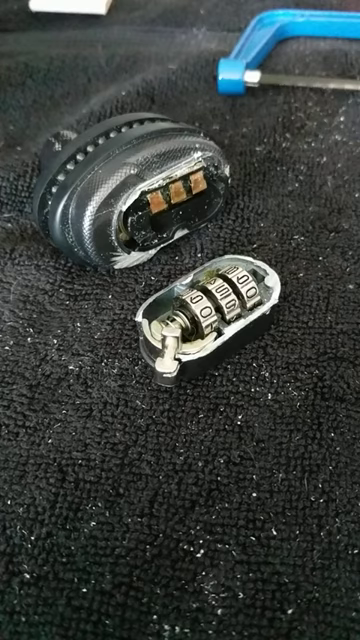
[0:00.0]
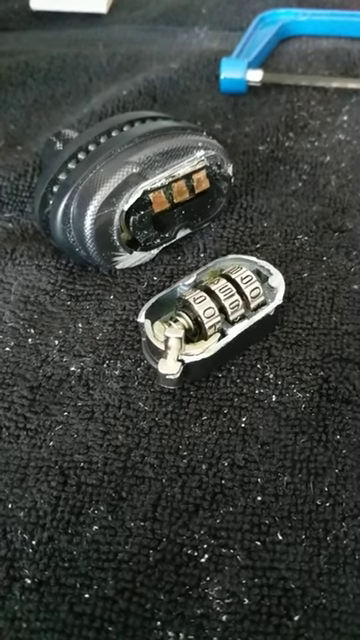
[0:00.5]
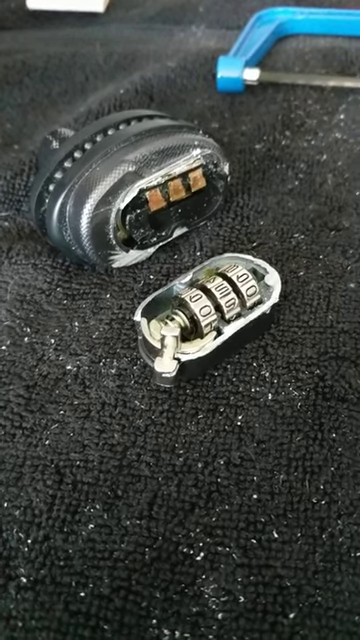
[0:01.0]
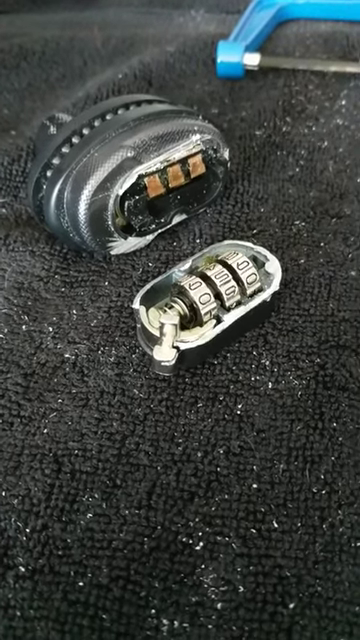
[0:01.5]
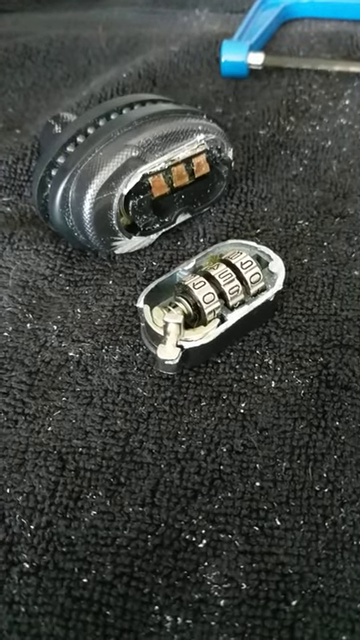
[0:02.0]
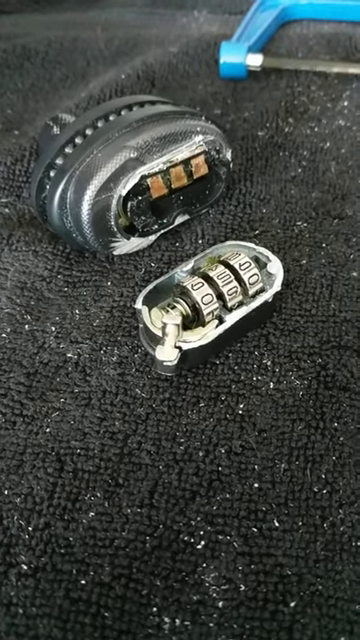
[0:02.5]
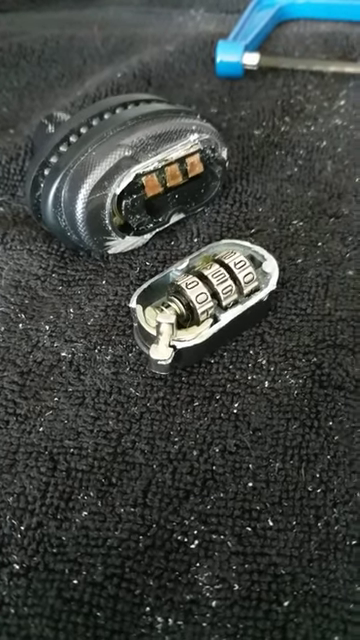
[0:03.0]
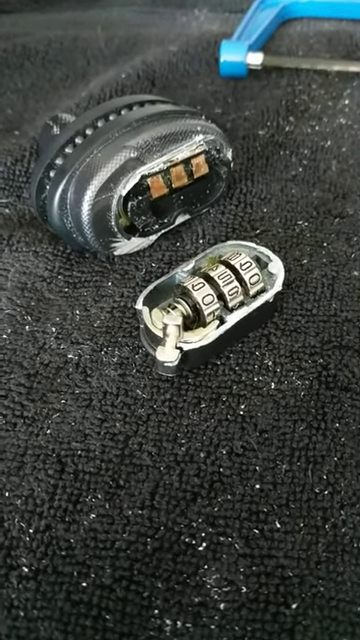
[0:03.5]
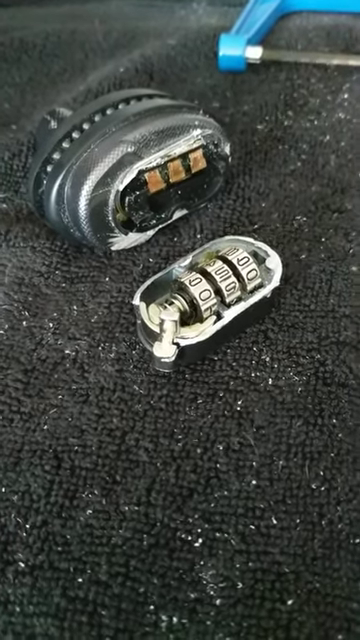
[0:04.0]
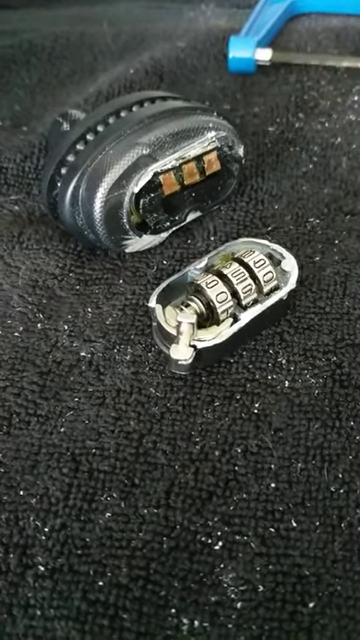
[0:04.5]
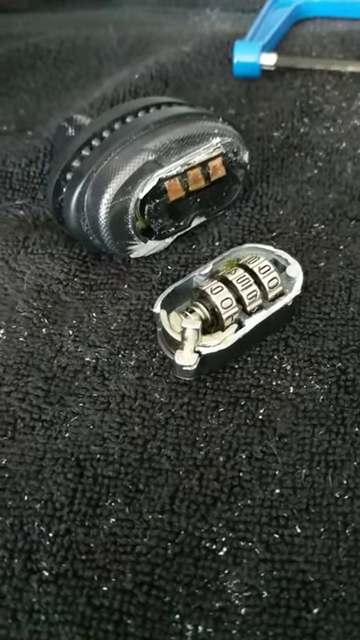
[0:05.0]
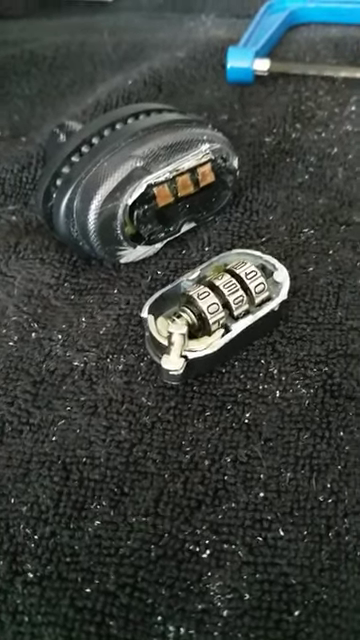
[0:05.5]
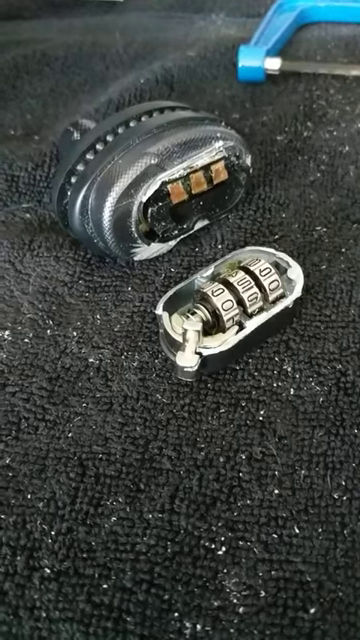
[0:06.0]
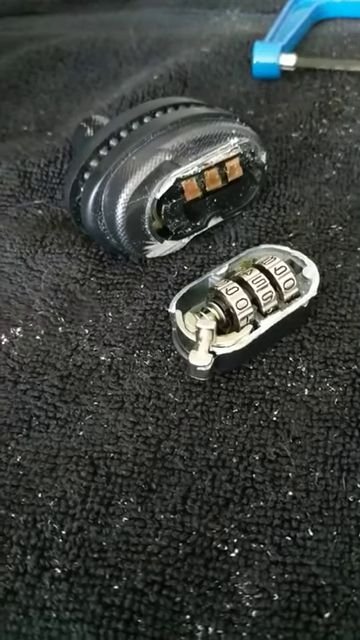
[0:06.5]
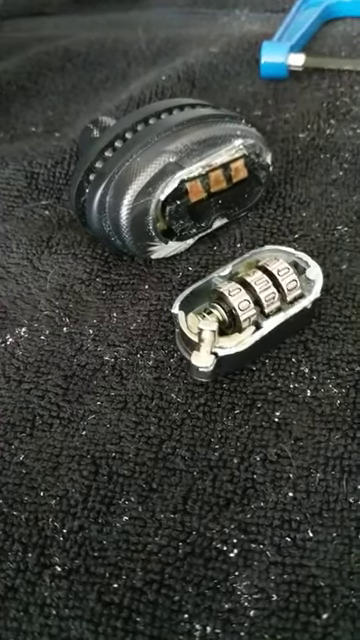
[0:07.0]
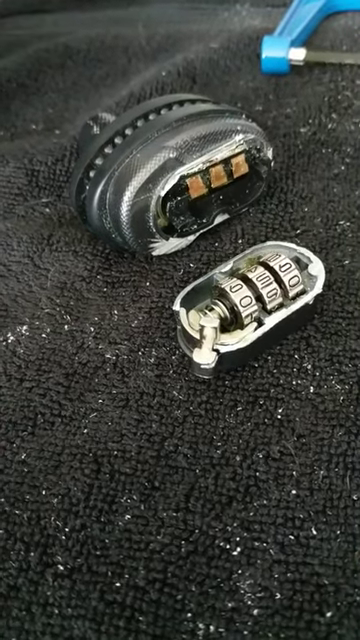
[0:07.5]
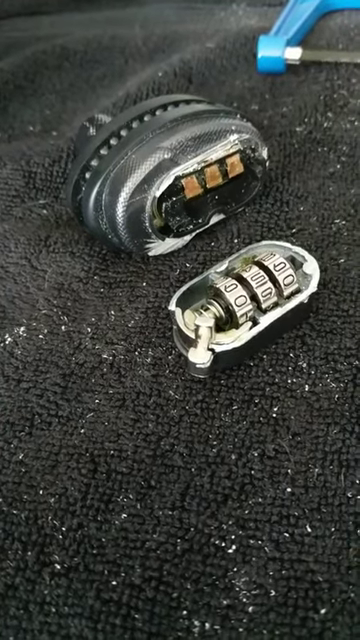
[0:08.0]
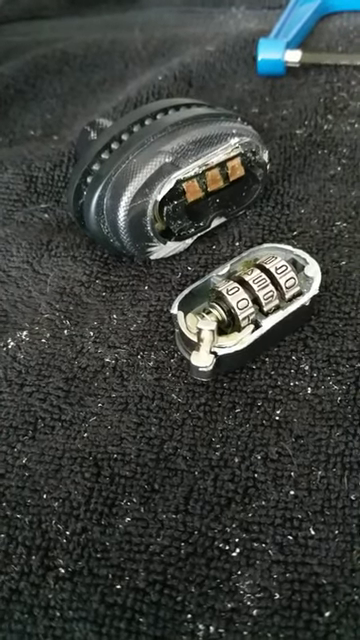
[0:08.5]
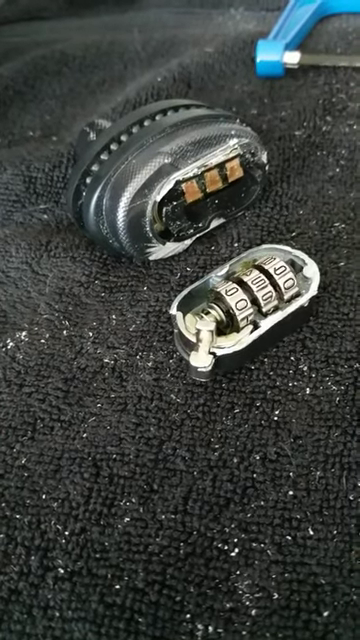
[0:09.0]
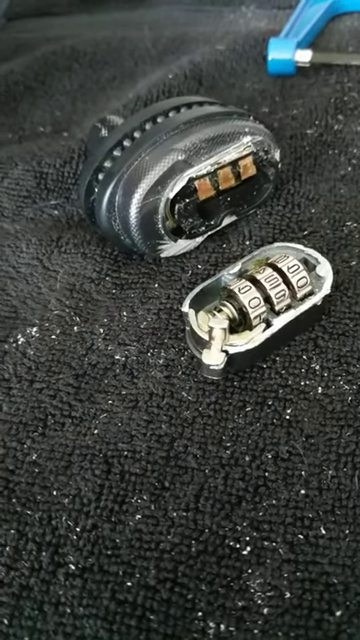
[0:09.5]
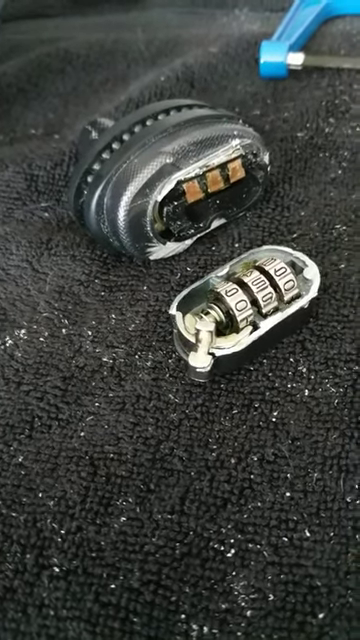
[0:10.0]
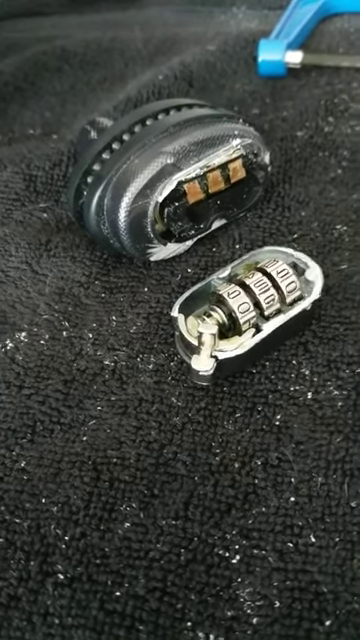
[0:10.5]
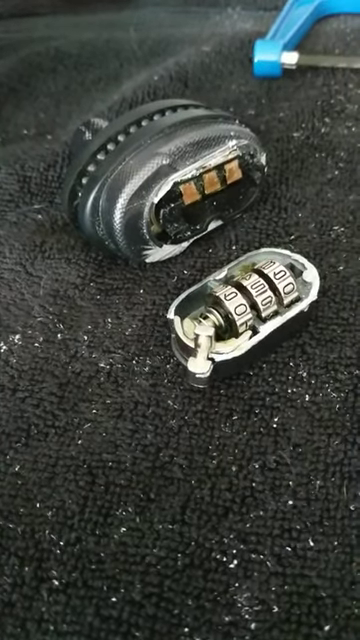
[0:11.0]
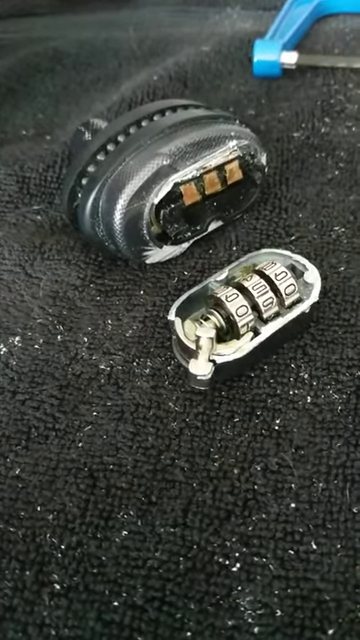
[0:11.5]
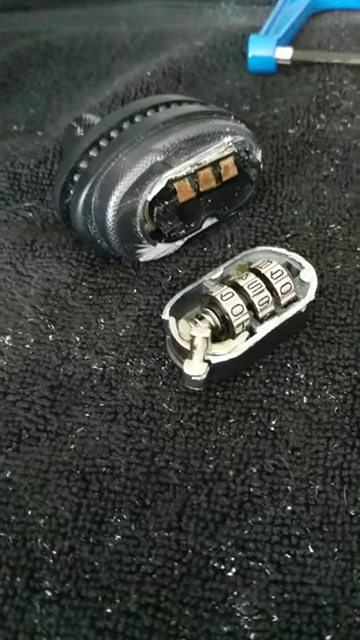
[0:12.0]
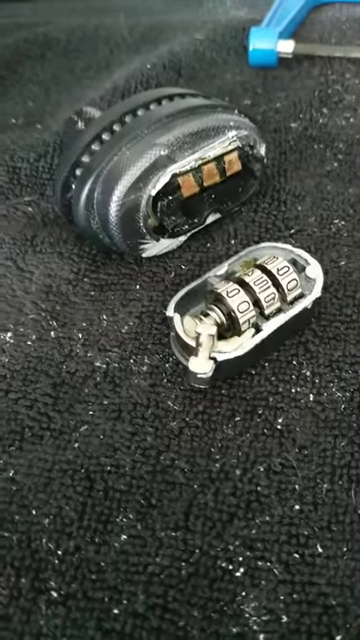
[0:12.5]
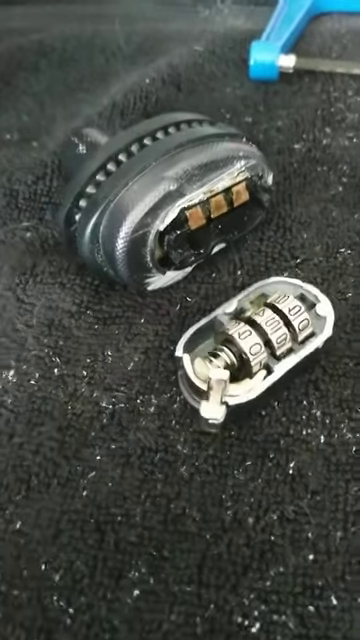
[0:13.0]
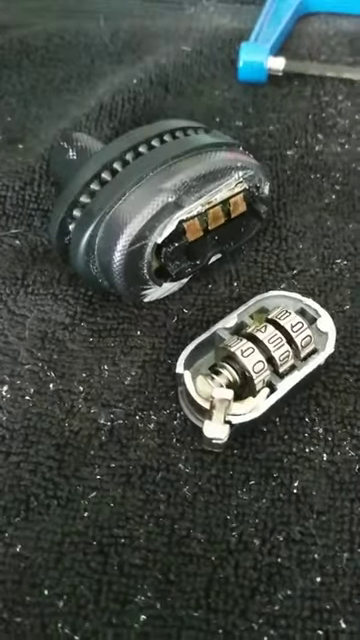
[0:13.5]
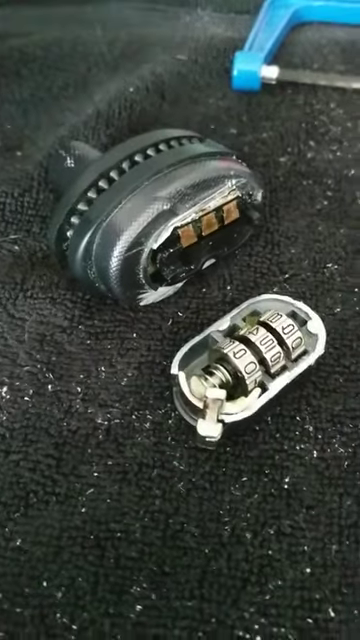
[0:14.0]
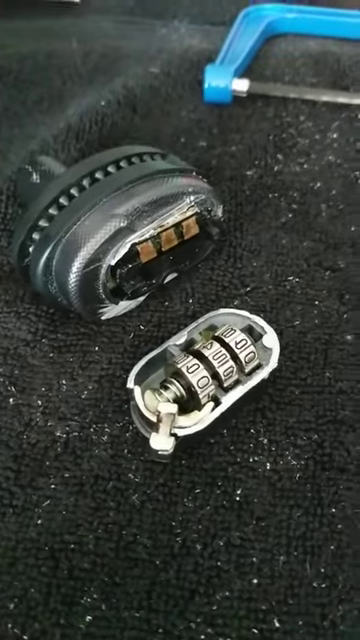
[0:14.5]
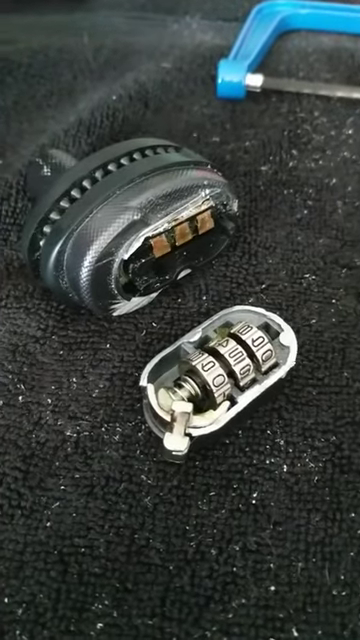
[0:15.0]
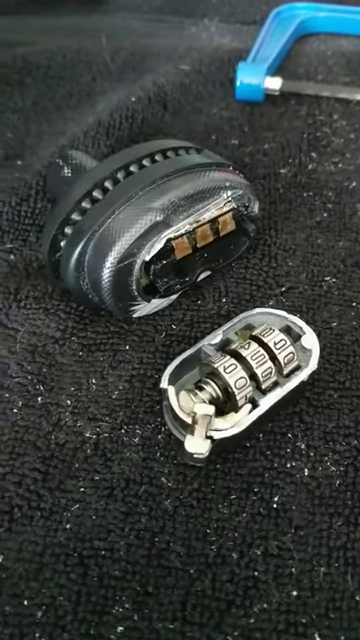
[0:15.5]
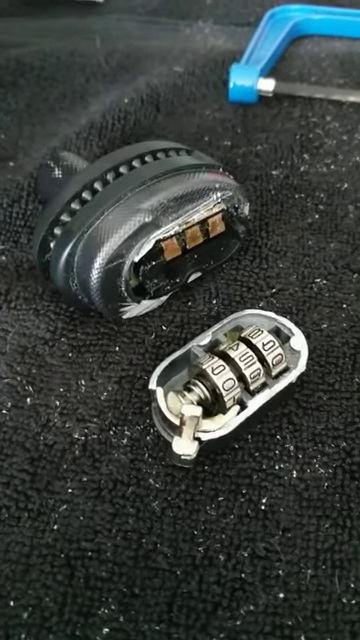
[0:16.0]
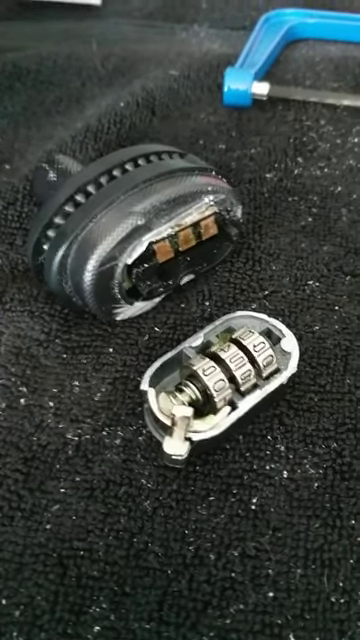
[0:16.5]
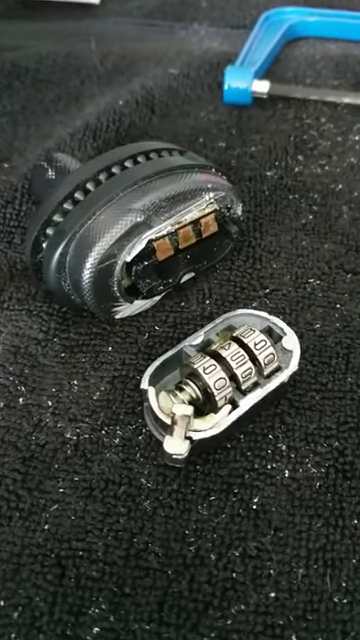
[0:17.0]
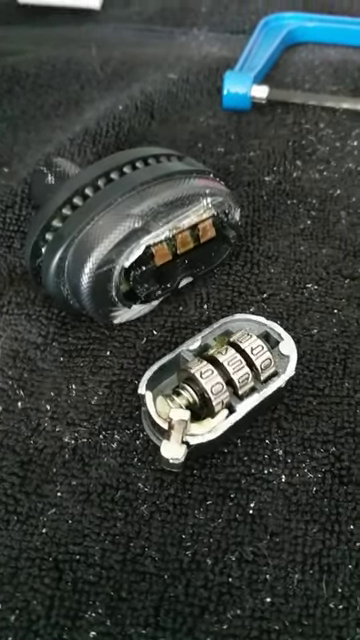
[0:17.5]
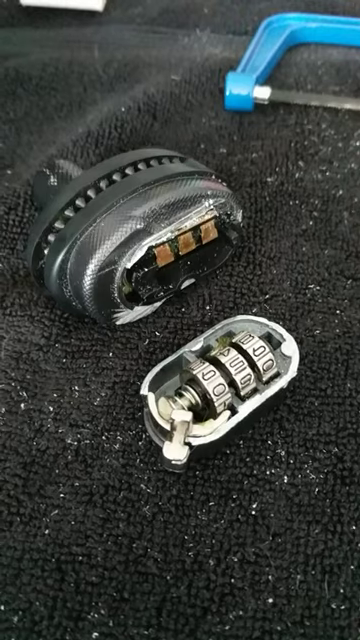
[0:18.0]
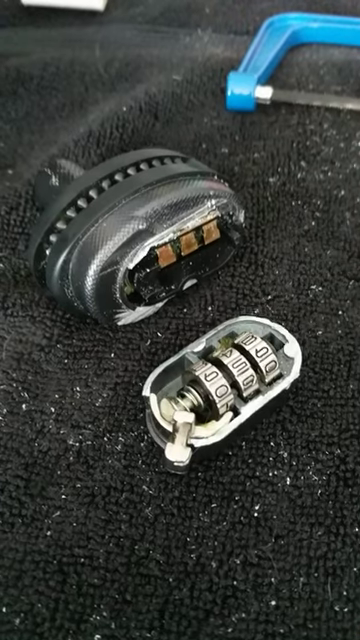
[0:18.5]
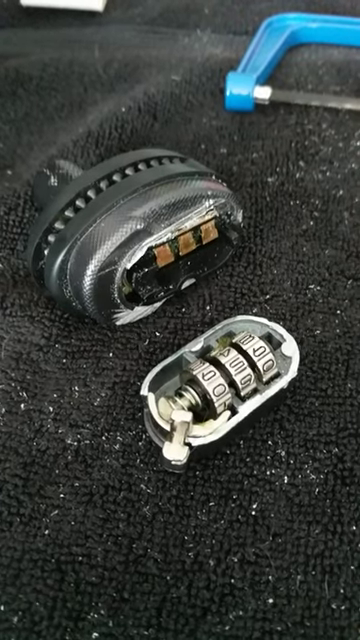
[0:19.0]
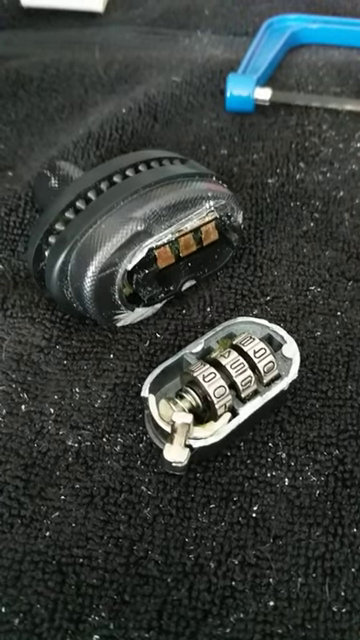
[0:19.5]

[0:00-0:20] Pieces of an opened, damaged key lock are placed side by side on a black, rough, uneven-looking background. One piece shows the metal part of the key with cyclical numbering and a knob sticking out. The other half, placed on its side, reveals what seems like a damaged motherboard with chips on it, surrounded by metal, while its top has a black handle, with small round metal balls inside. In the top right corner is what looks like a blue tool shaped like a hacksaw, with a blue handle and a black line on it; only half of it is visible. The key cover is metallic and has some black coverings around it. There are two pieces of this metal key, and it looks damaged.